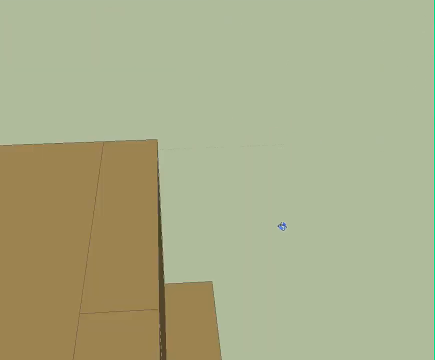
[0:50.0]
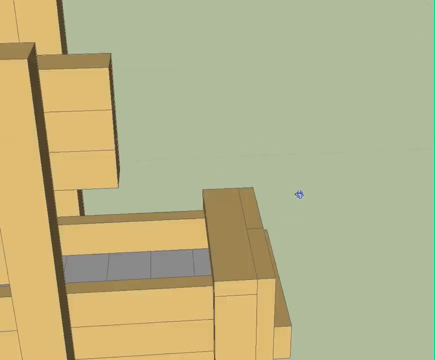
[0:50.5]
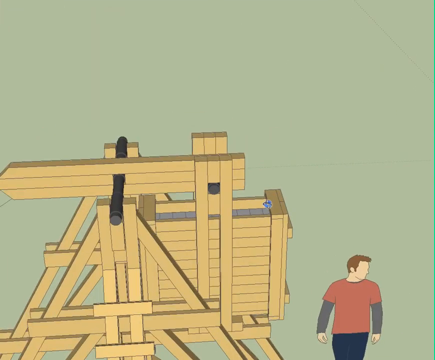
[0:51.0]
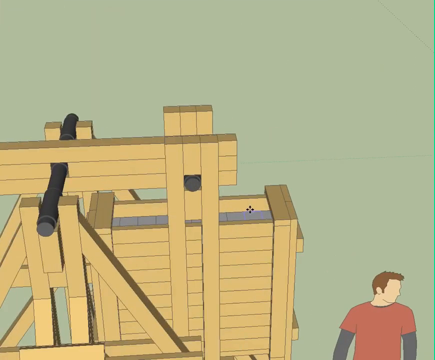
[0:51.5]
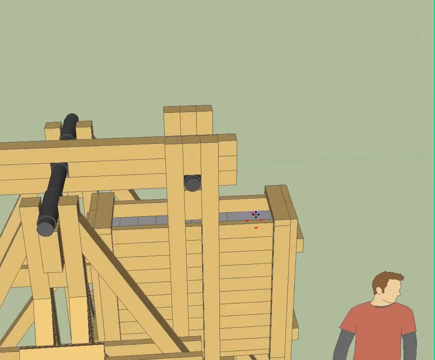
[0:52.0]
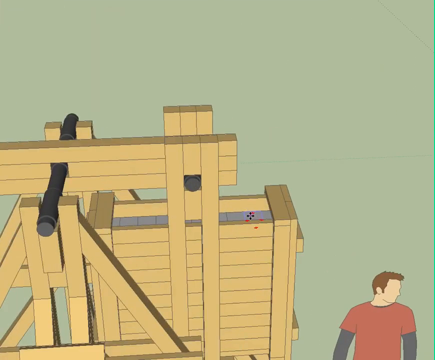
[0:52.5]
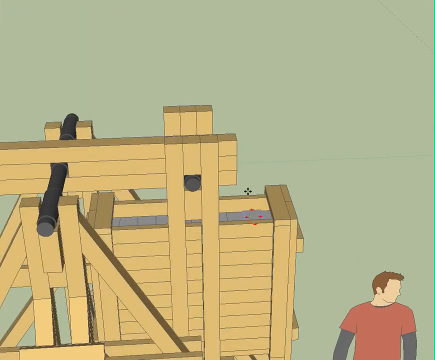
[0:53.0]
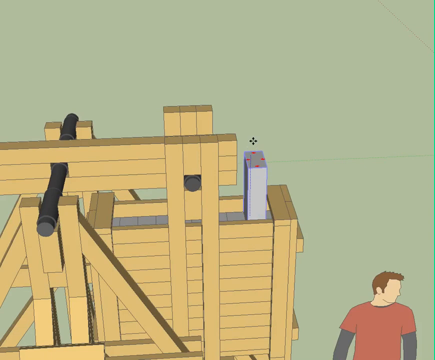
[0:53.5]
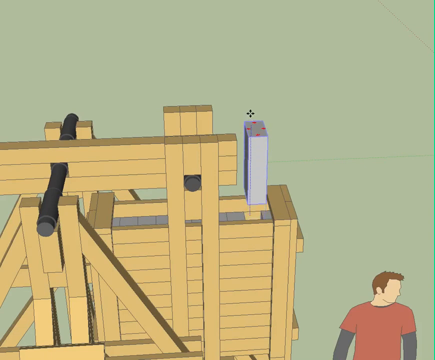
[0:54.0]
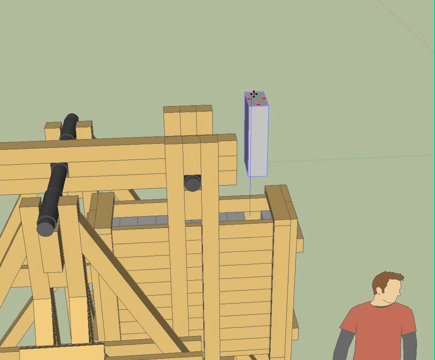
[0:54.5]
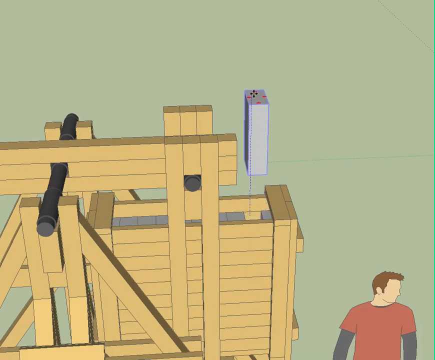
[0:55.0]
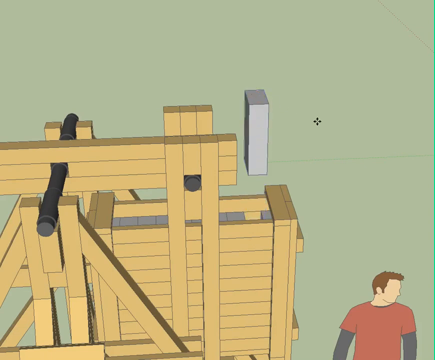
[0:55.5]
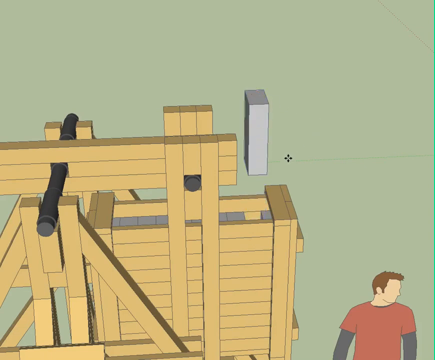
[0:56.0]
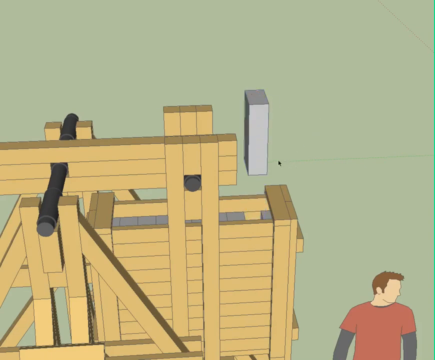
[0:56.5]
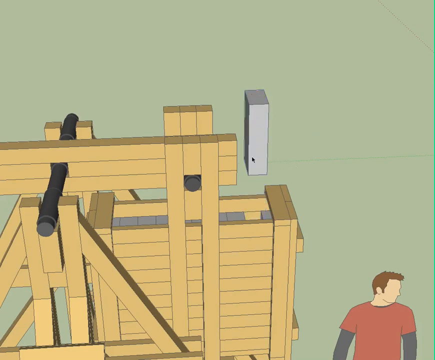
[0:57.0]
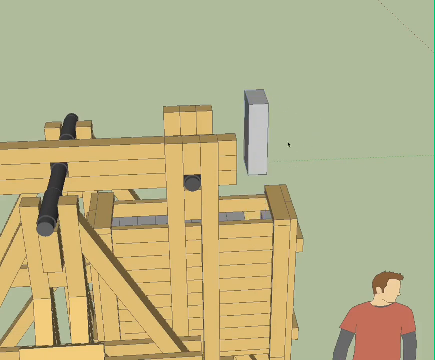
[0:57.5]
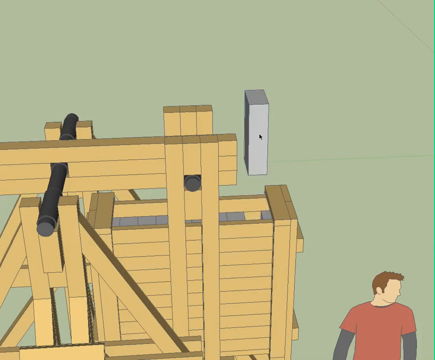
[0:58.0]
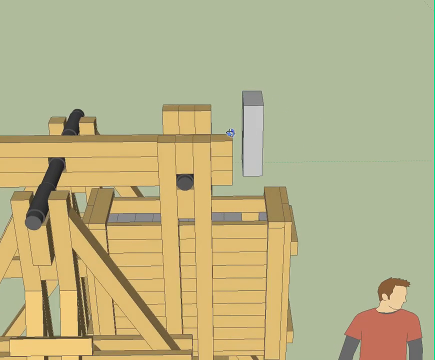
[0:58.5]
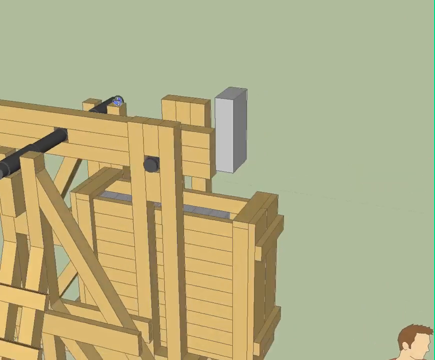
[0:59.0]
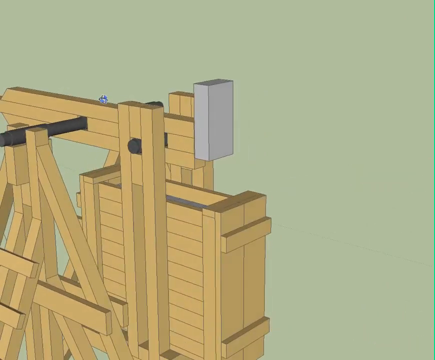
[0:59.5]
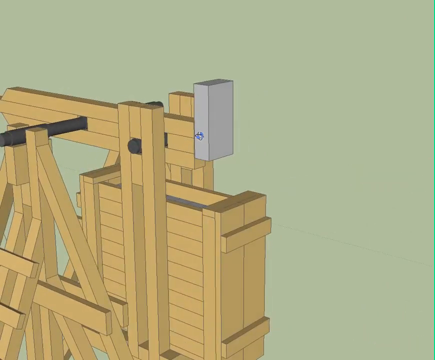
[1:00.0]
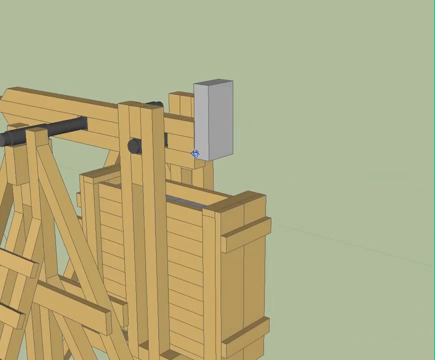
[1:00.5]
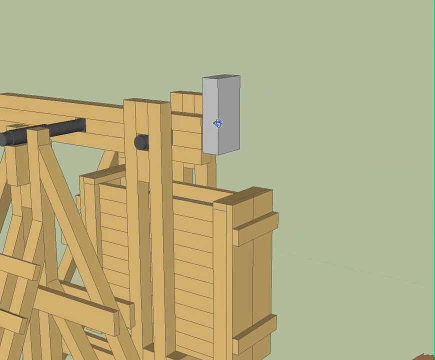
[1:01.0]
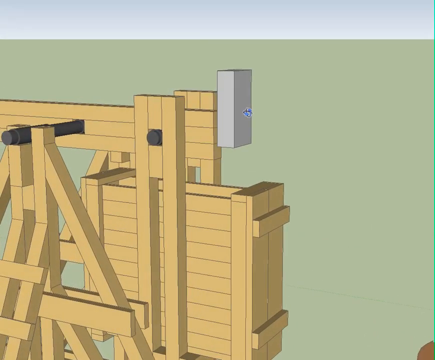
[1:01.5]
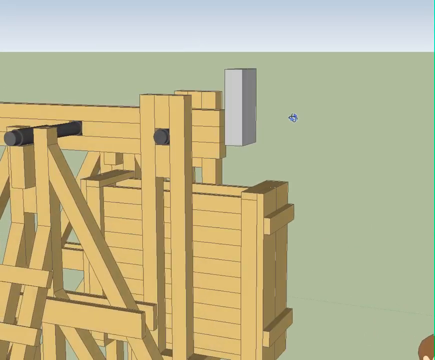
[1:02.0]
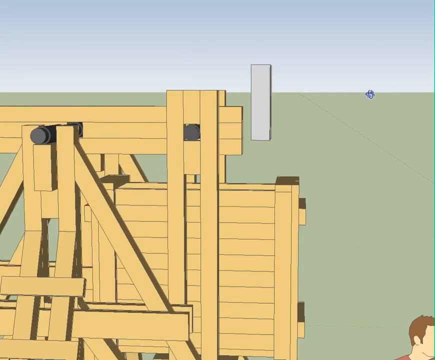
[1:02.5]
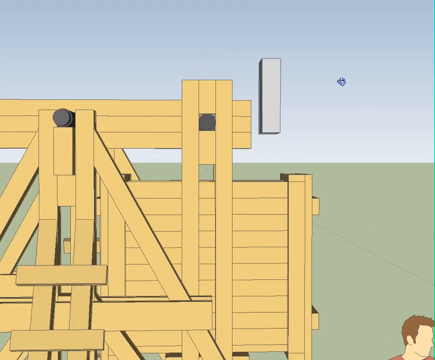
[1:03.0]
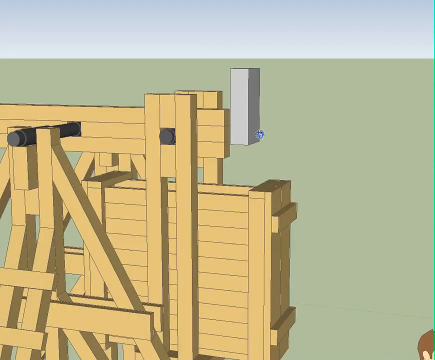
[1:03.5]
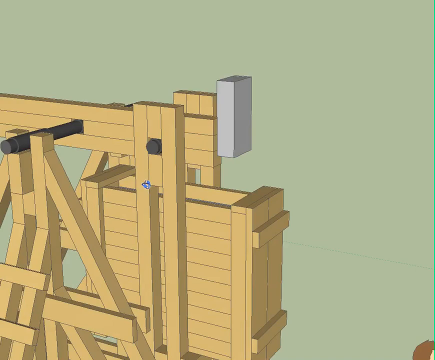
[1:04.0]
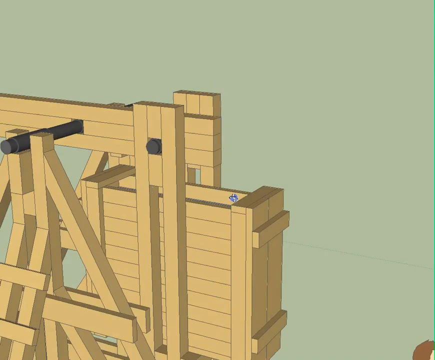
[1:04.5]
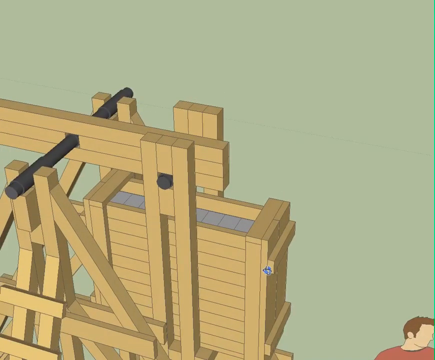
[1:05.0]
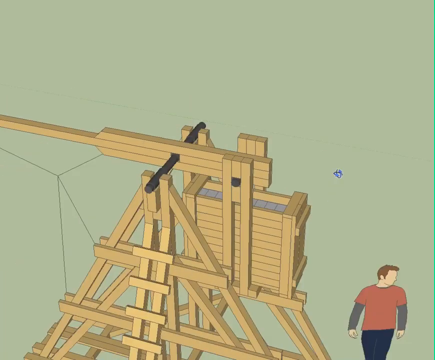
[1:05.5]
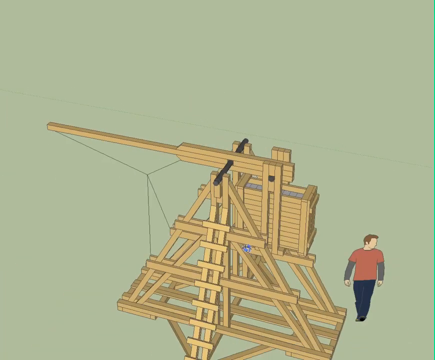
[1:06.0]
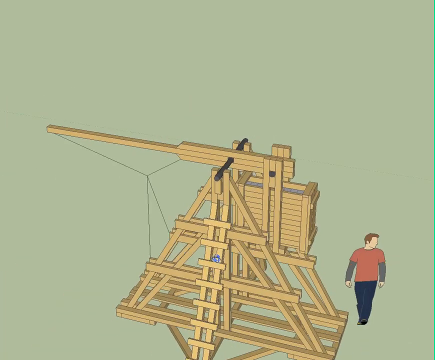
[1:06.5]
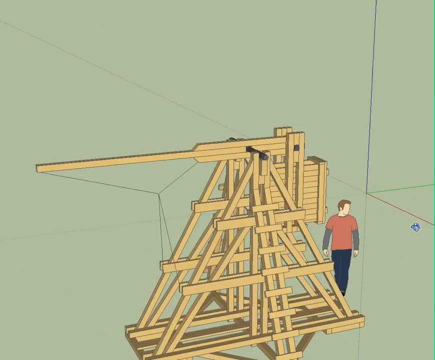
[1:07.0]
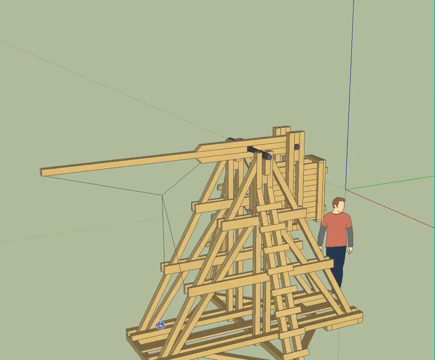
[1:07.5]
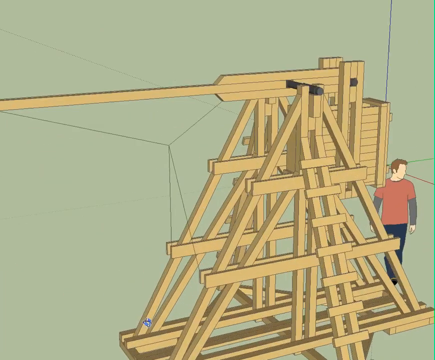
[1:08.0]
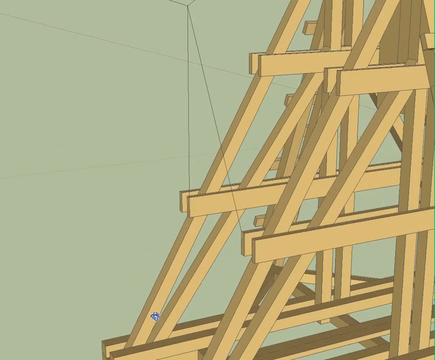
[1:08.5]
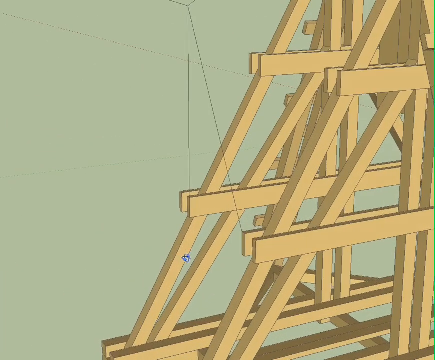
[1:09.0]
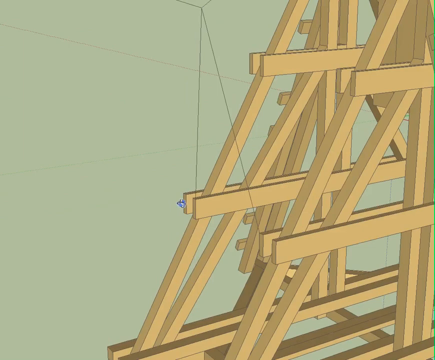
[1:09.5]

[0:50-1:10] In the computer-generated view, the view moves to an angle from above. Inside a little box between the two ladders on the outside there are gray boxes, and the cursor pulls a gray box out and moves it around; it seems to float in the air. The box has four red dots on it, and the cursor changes to four black dots. Then it puts the box back down, goes to the front and the inner side of the wooden structure, taps two pieces of the wood and moves over.